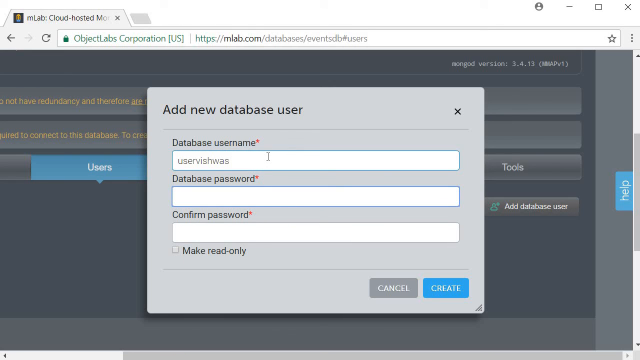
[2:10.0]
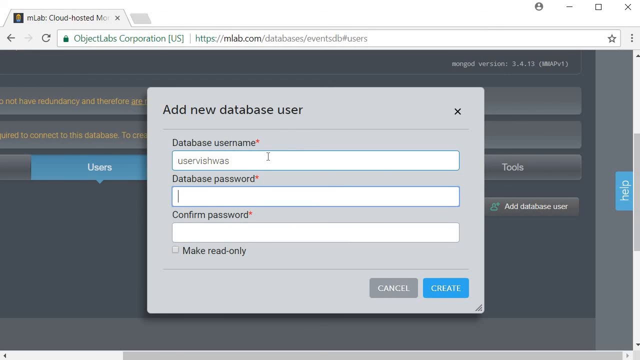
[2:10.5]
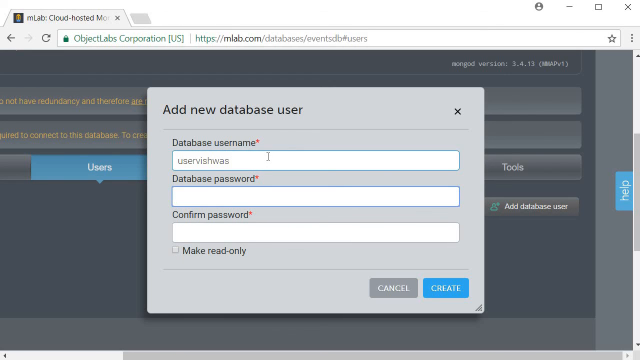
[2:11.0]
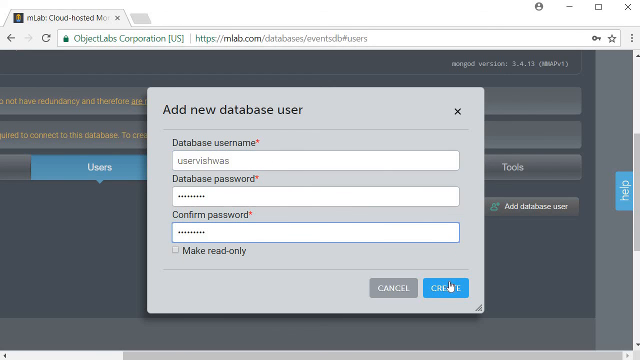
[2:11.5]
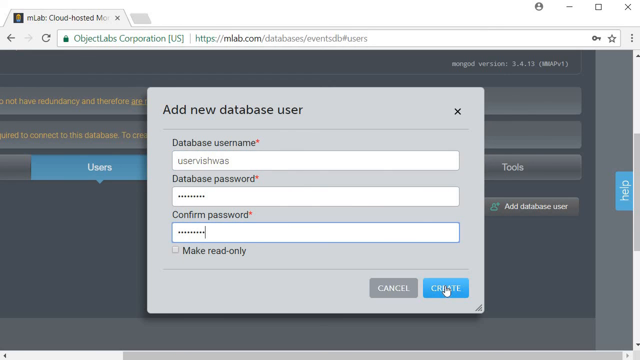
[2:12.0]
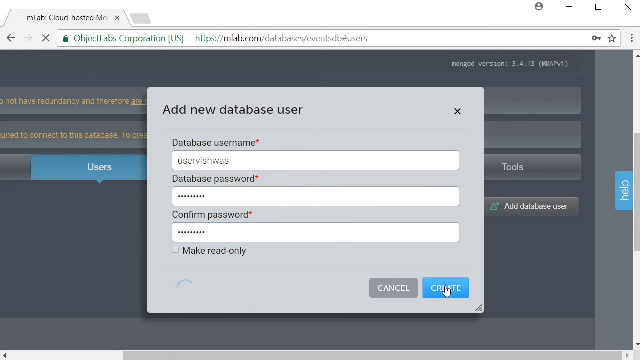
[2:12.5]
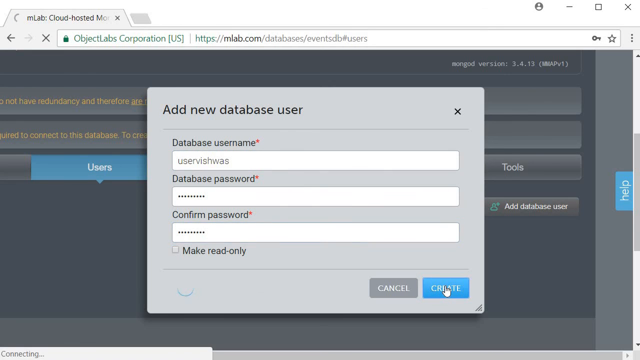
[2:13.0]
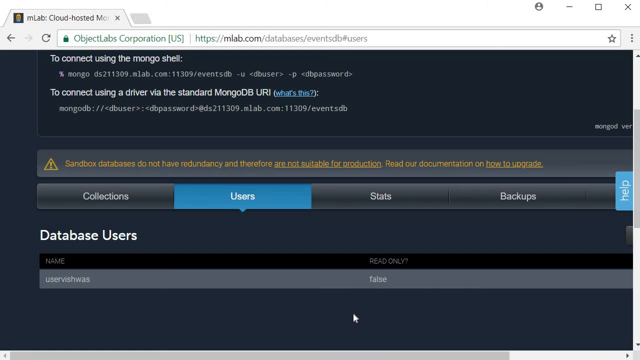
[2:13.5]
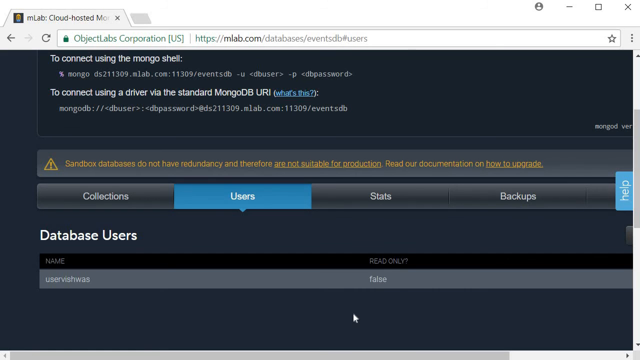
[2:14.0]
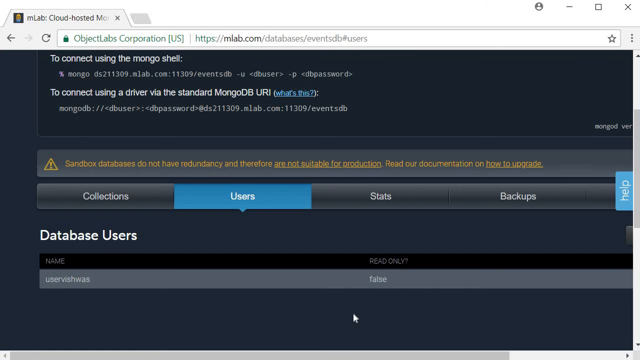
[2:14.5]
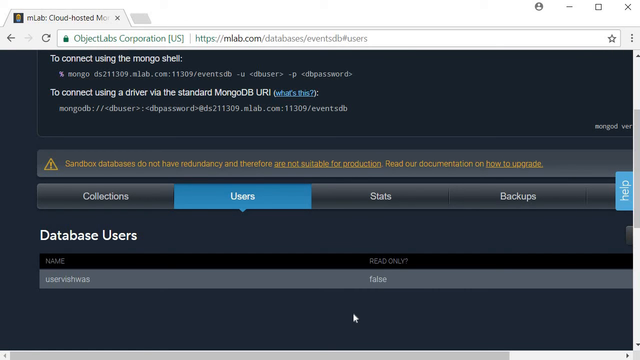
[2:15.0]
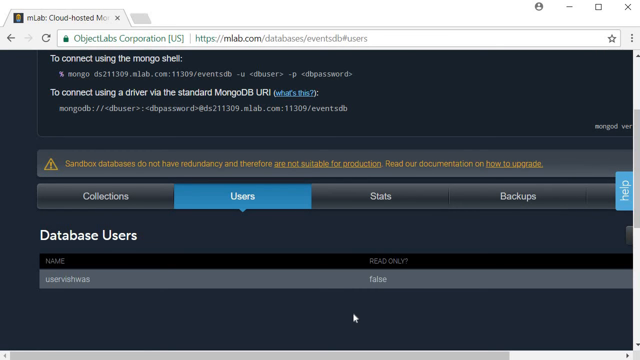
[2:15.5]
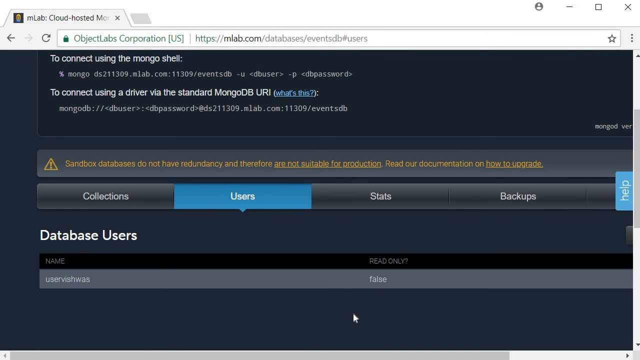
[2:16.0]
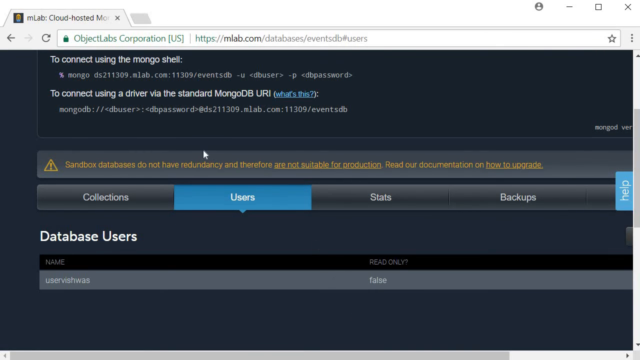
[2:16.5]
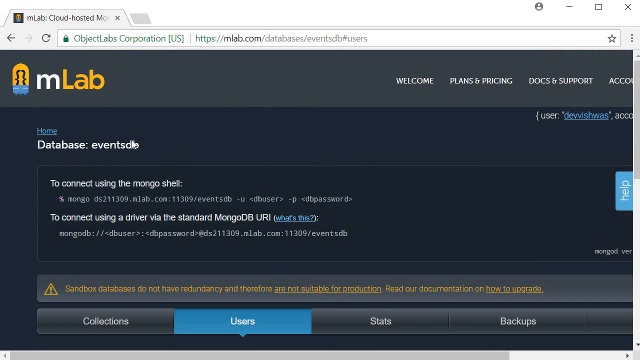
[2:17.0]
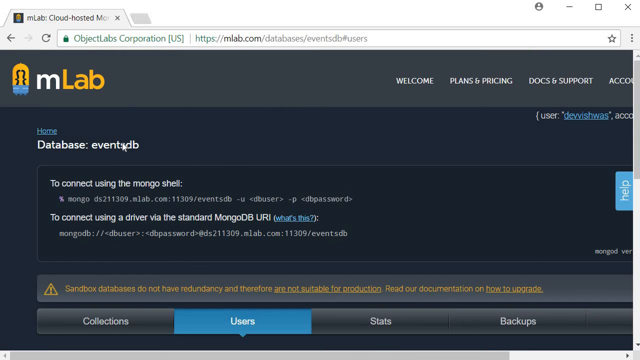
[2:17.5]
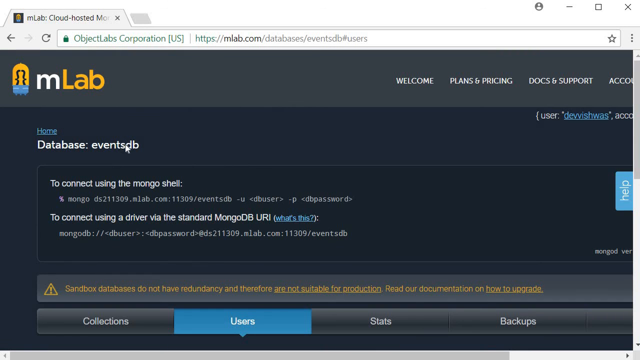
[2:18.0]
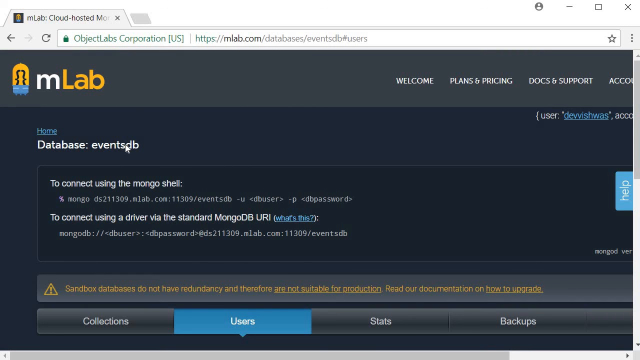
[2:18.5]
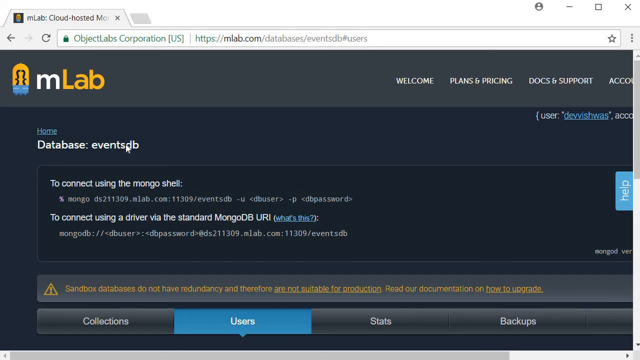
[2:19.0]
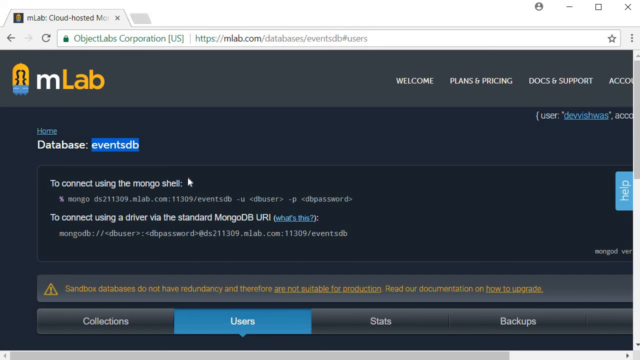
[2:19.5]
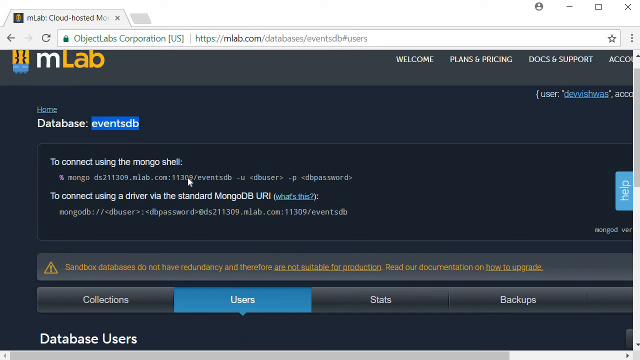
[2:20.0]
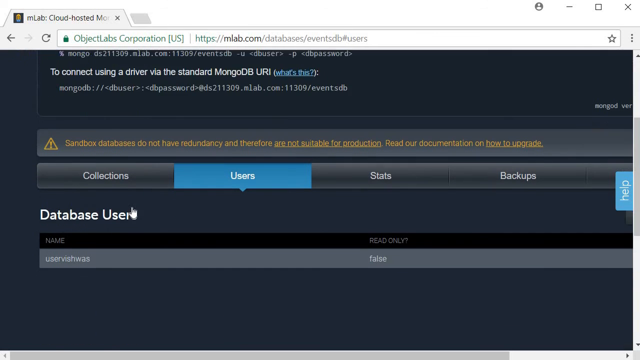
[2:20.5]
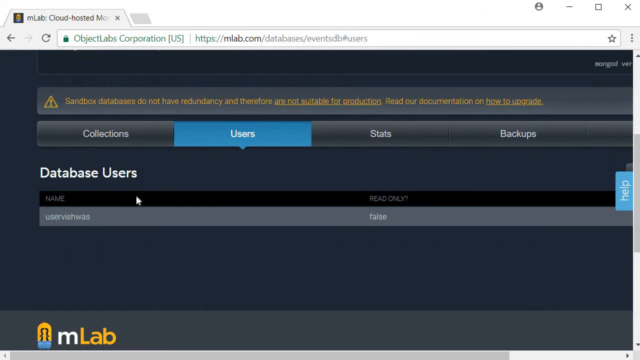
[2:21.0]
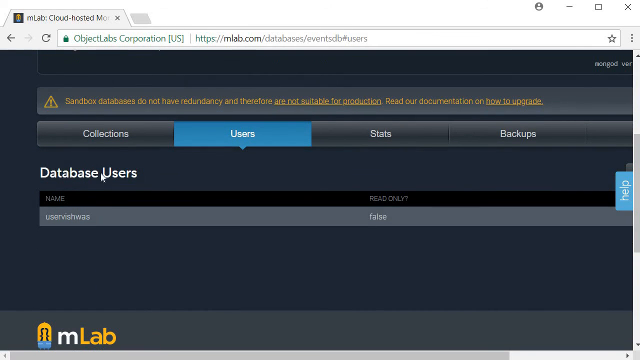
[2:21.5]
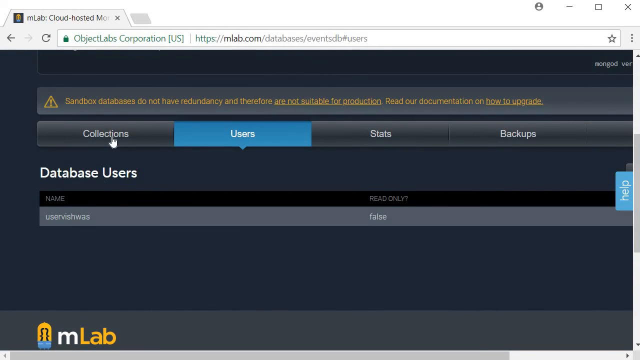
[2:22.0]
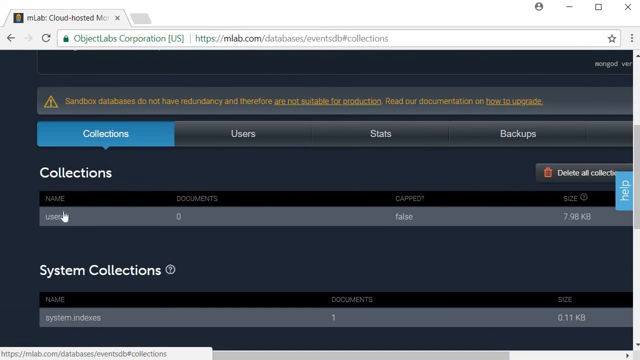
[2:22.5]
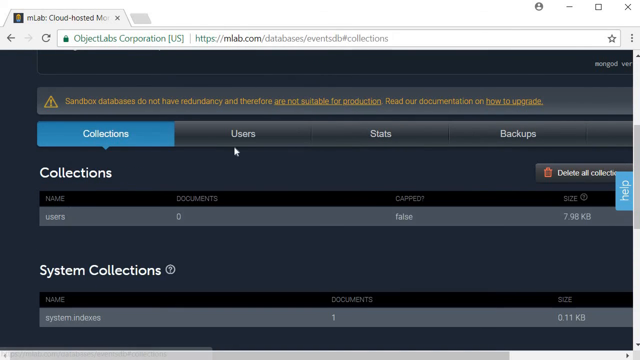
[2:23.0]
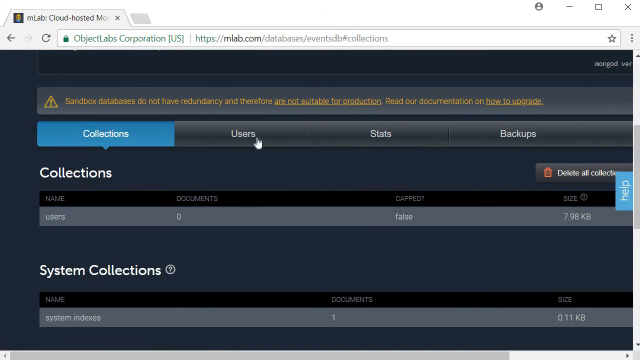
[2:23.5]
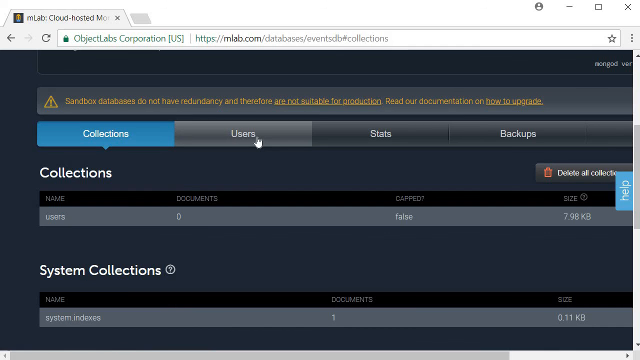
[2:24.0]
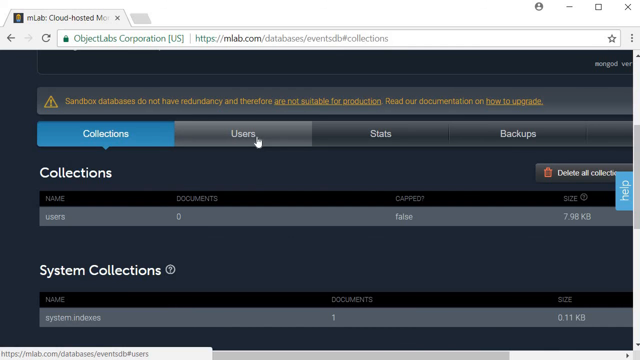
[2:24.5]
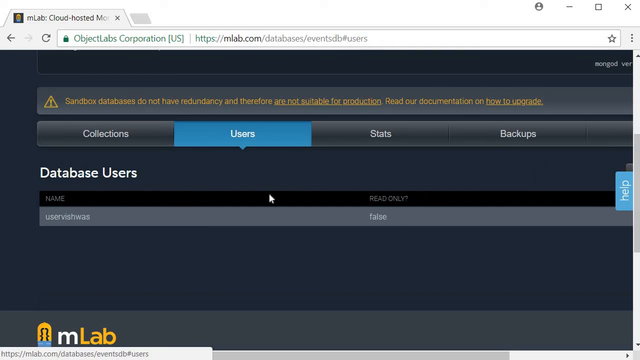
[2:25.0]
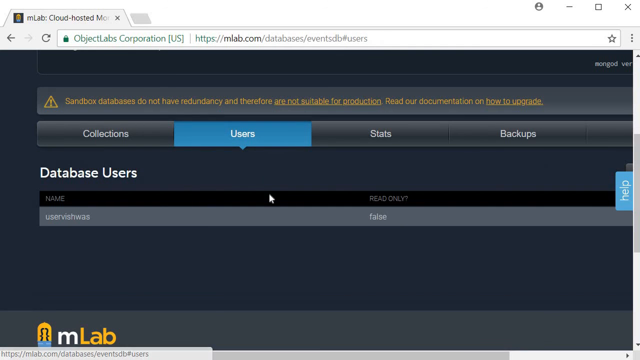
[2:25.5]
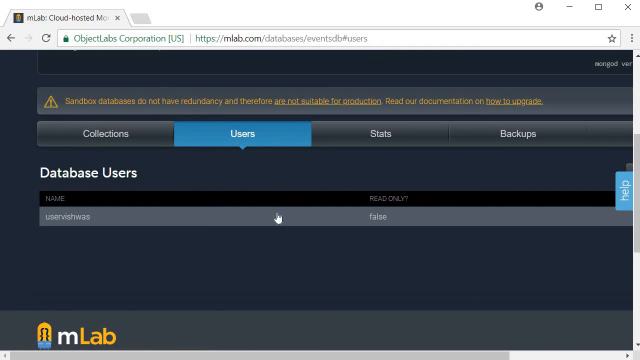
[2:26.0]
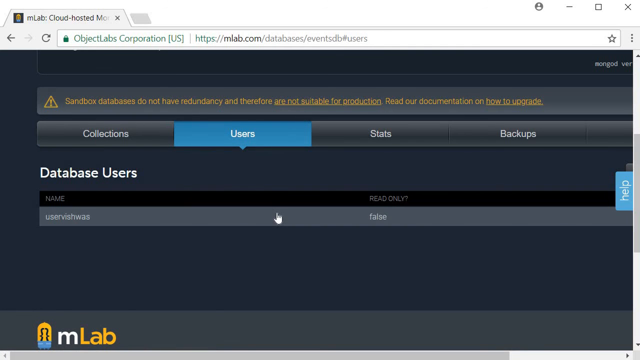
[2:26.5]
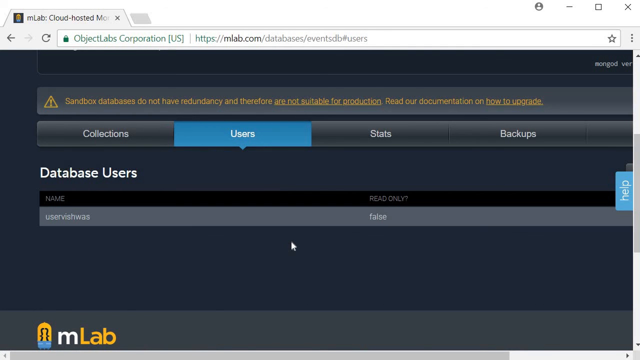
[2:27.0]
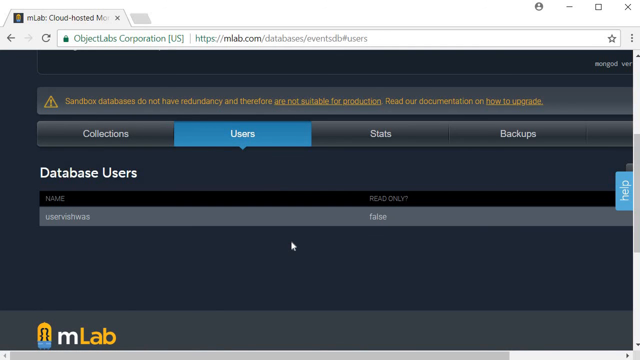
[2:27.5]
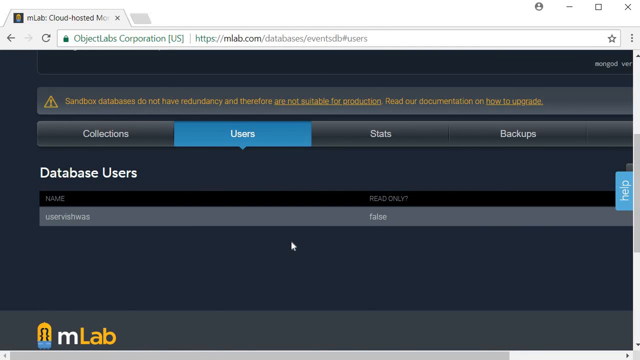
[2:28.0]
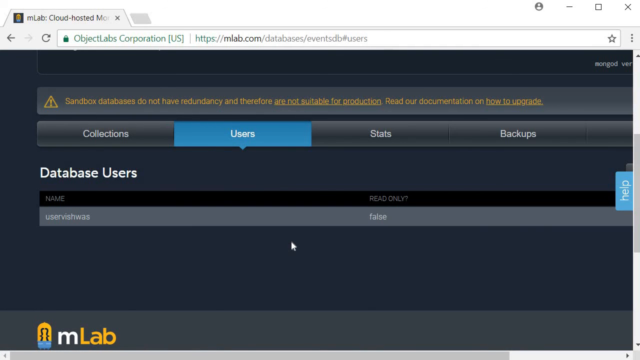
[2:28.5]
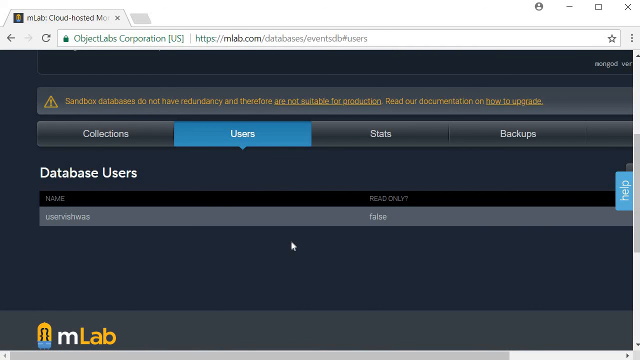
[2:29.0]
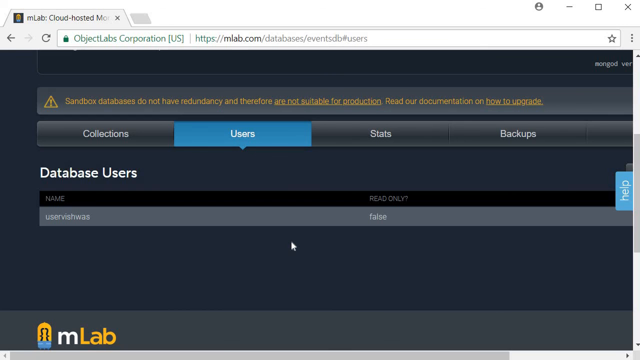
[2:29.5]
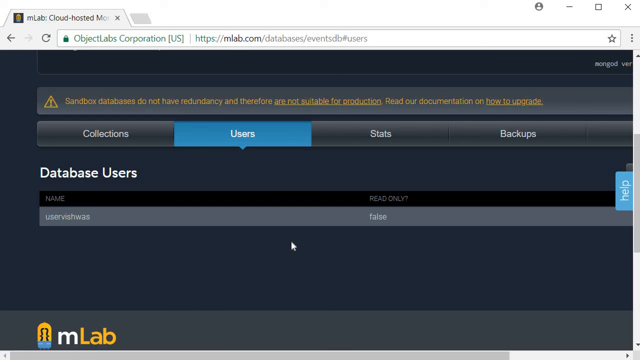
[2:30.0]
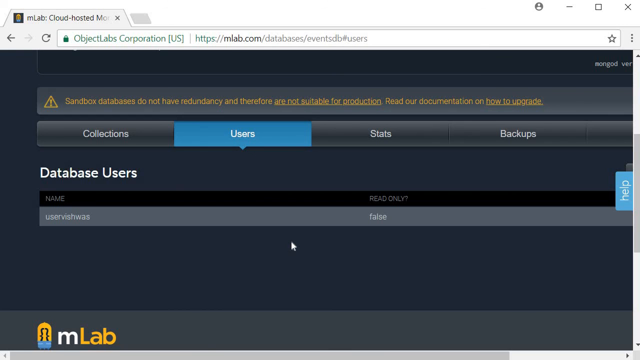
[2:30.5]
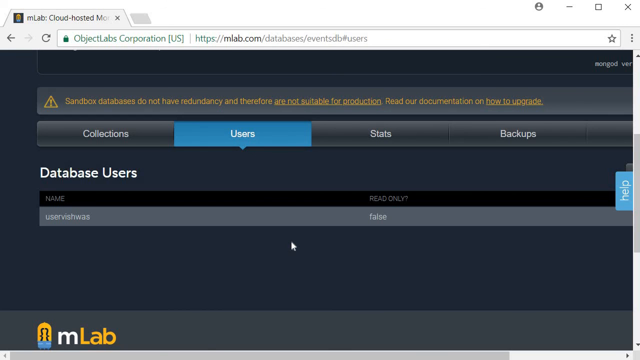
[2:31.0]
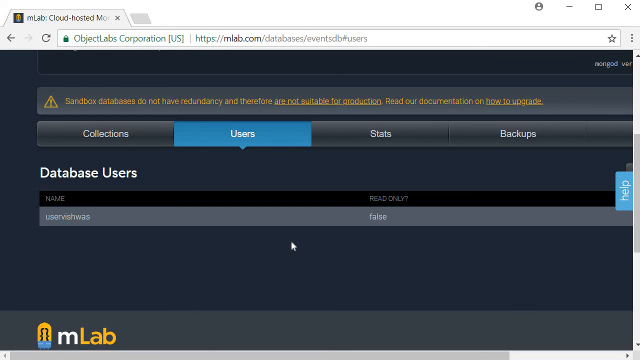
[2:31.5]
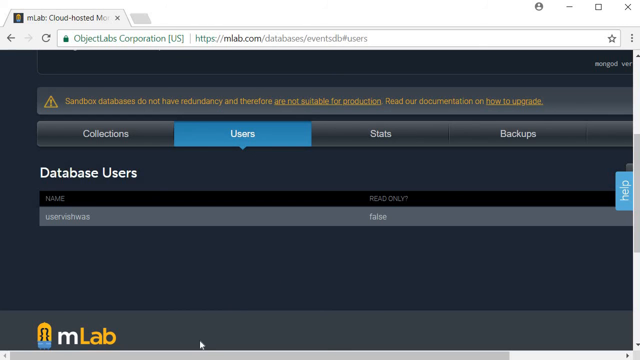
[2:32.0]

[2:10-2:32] Someone is using the site mlabs.com and managing their account on it. The website has a dark gray background with mostly white text. A gray box in the middle of the screen has text at the top reading "add new database user", with three fields beneath it: username, password and confirm password. The user has typed "uservishwas" into the database username field, then types in two passwords, which are hidden by asterisks, and clicks the create button. The gray box disappears. In the middle of the screen is a row of columns, with "collections" first in gray. The second is labeled "users" and is highlighted in blue; it points downward to white text reading "database user", beneath which the newly created user, "uservishwas", is shown. The user then scrolls back up to the top of the page, where white text reads "database: events db". The user highlights "events db".